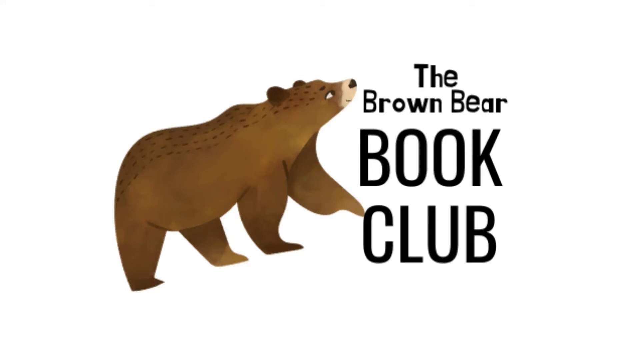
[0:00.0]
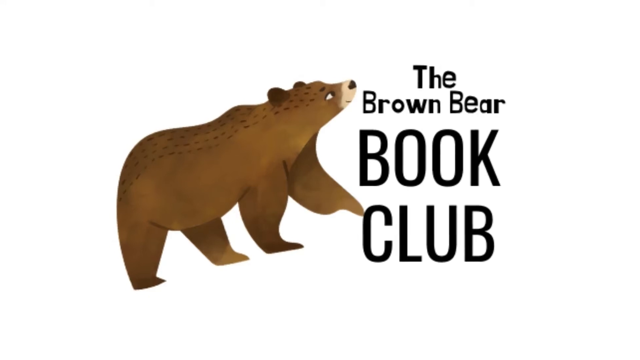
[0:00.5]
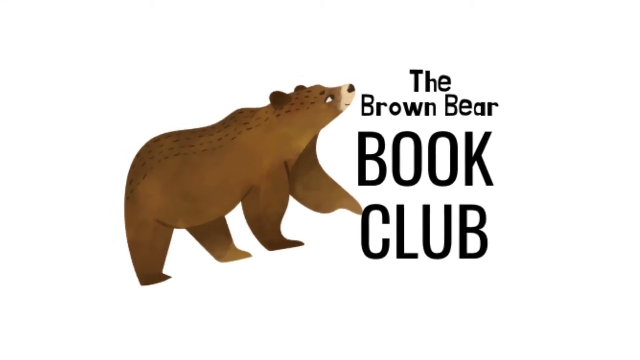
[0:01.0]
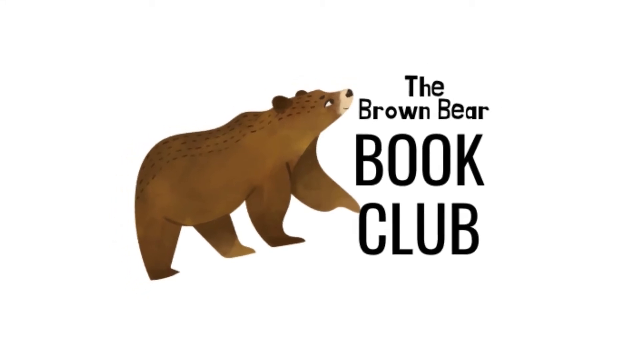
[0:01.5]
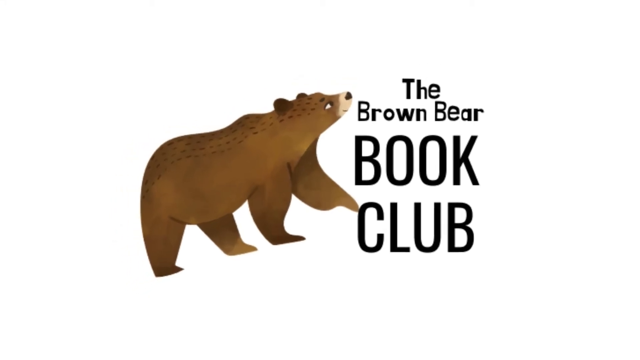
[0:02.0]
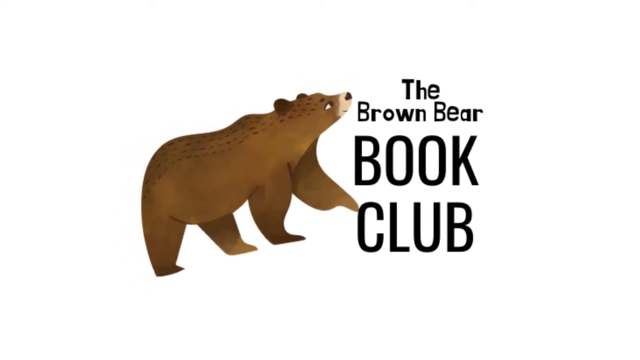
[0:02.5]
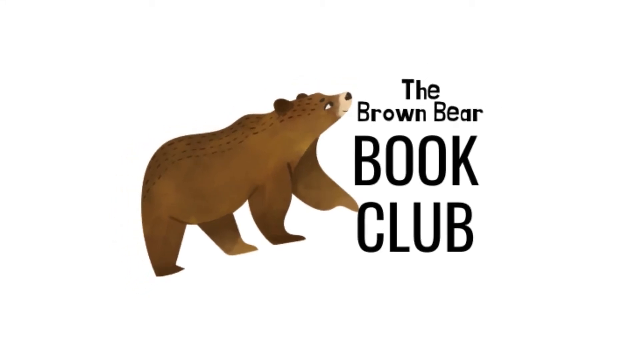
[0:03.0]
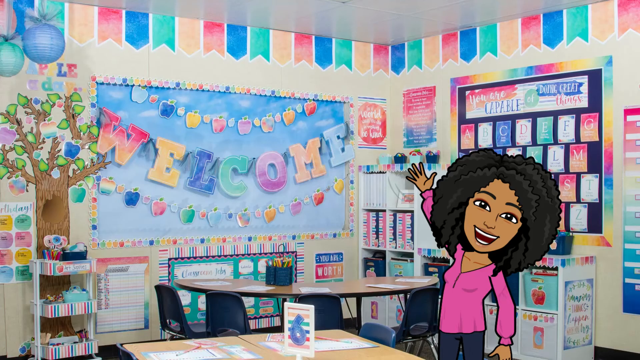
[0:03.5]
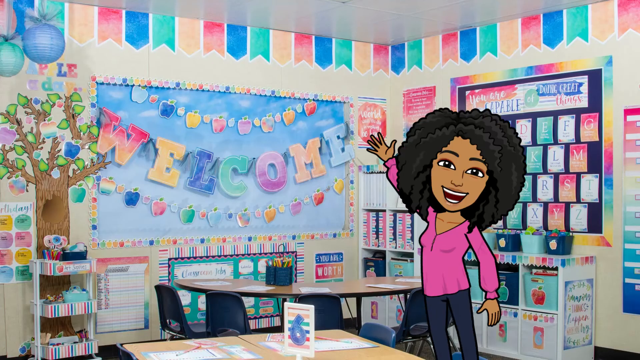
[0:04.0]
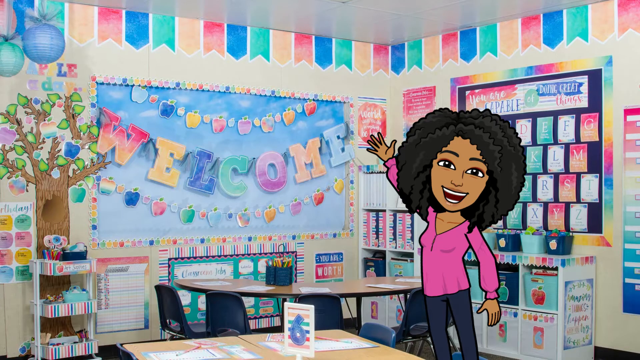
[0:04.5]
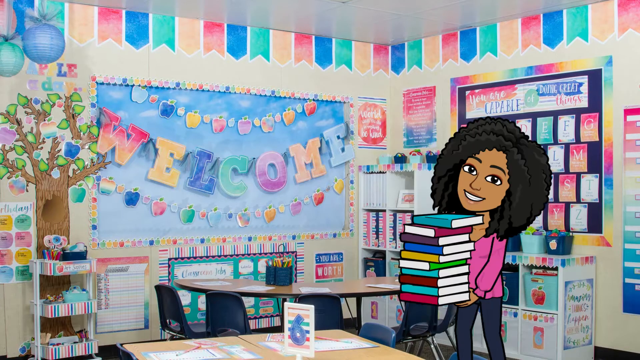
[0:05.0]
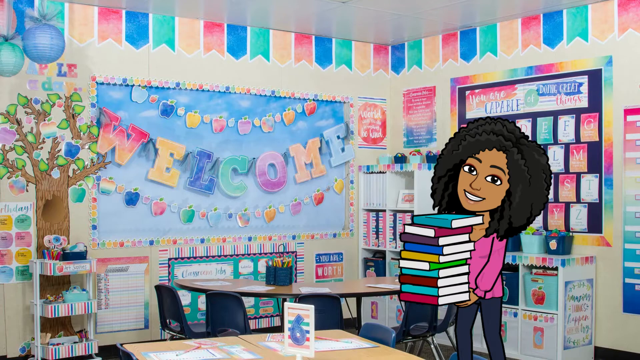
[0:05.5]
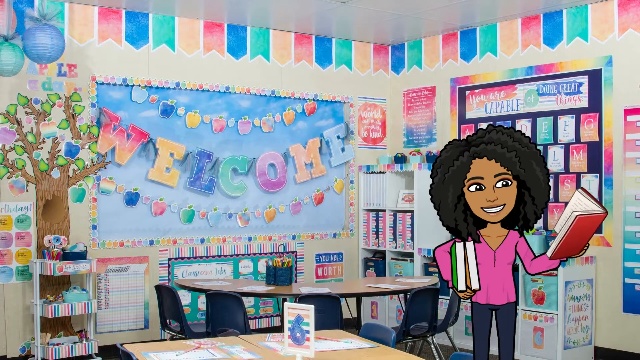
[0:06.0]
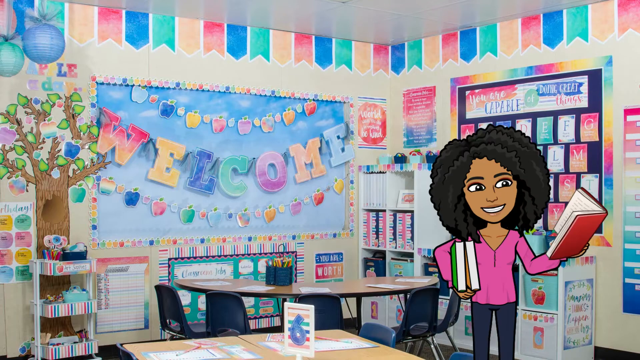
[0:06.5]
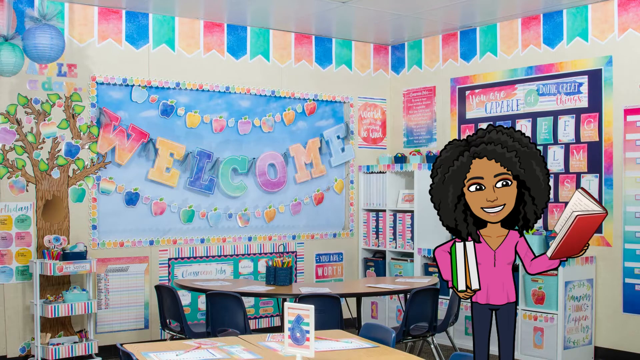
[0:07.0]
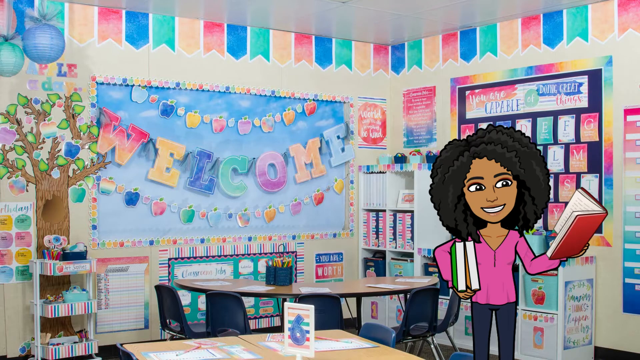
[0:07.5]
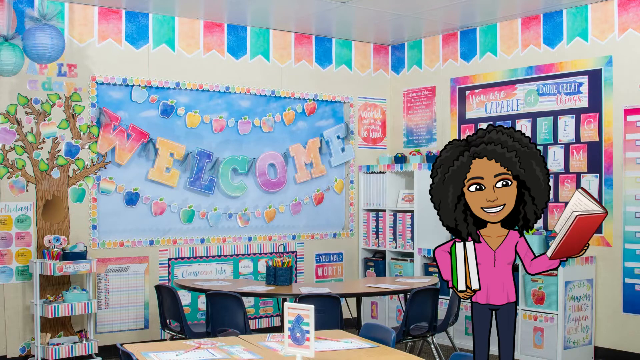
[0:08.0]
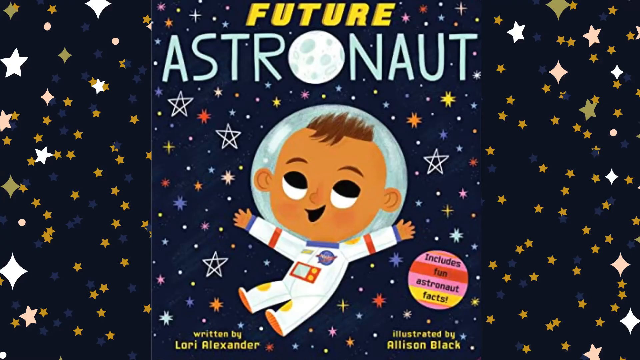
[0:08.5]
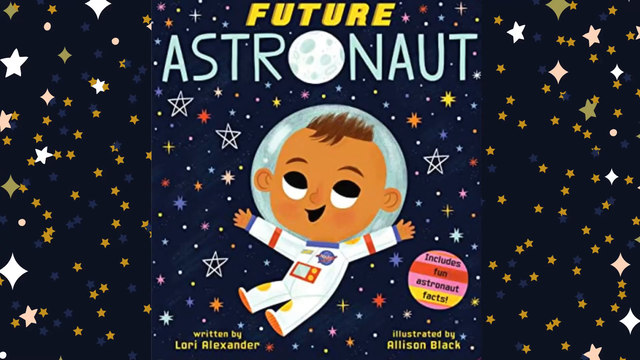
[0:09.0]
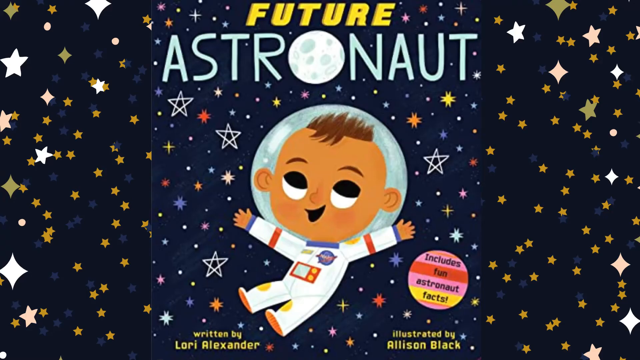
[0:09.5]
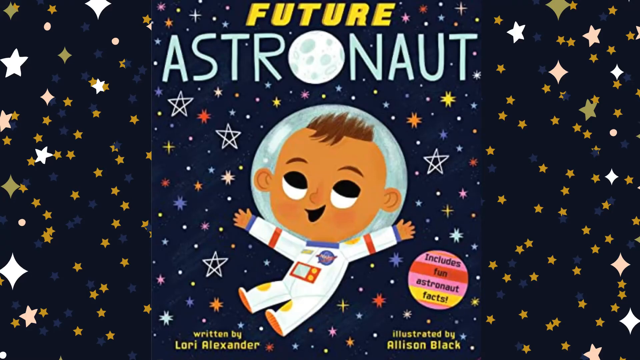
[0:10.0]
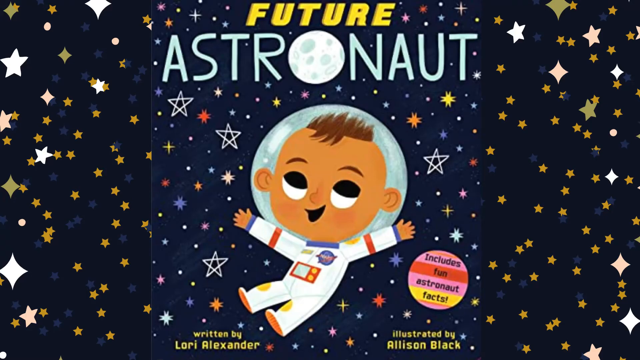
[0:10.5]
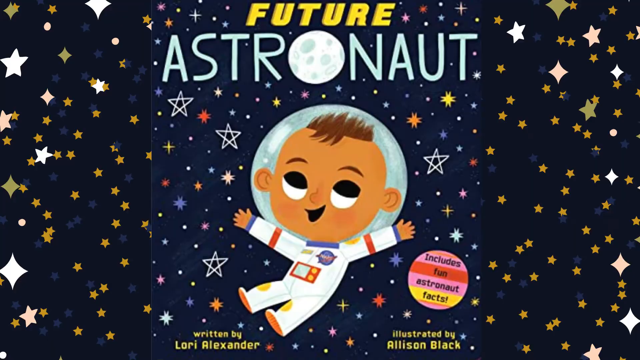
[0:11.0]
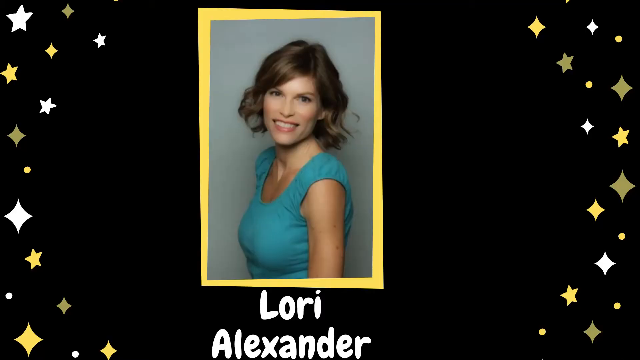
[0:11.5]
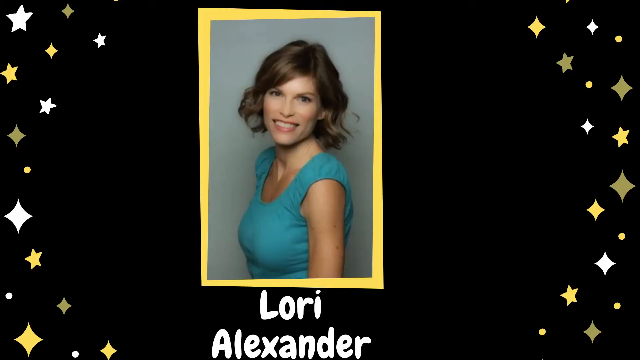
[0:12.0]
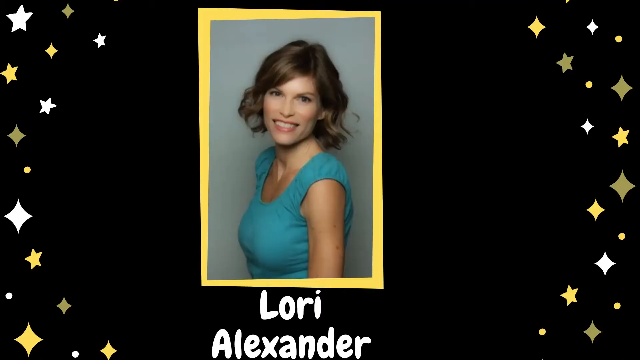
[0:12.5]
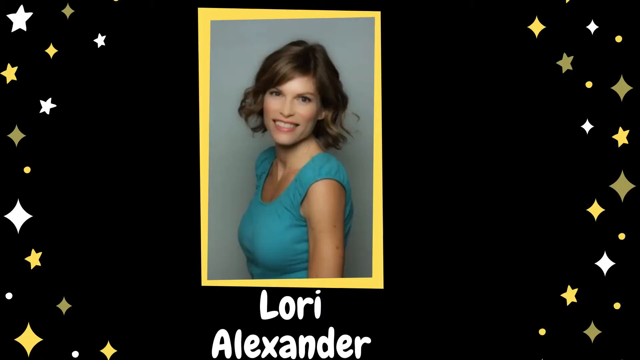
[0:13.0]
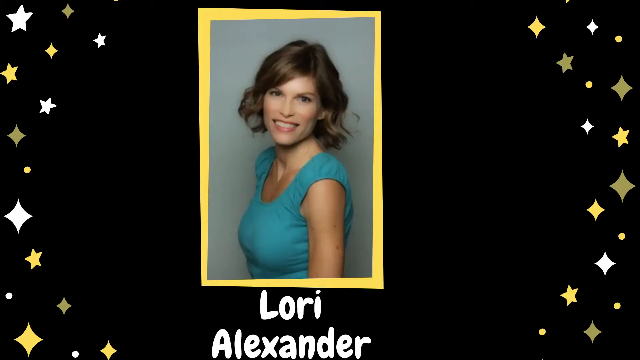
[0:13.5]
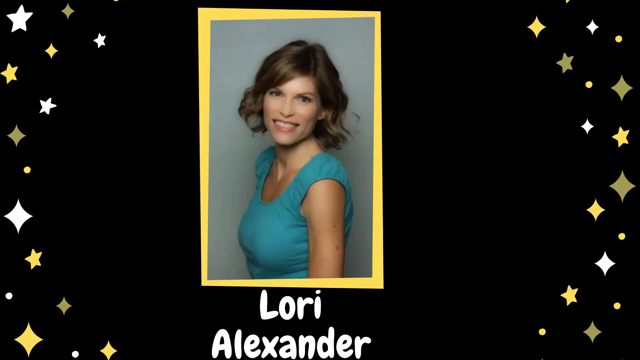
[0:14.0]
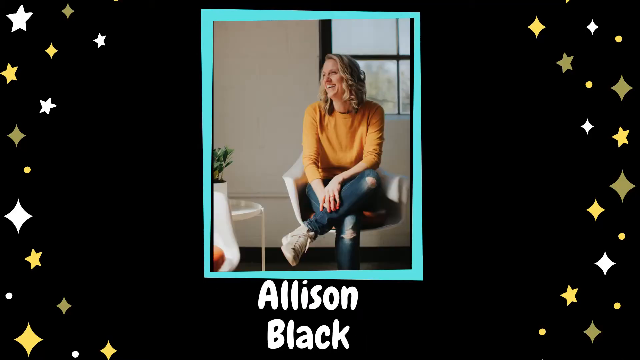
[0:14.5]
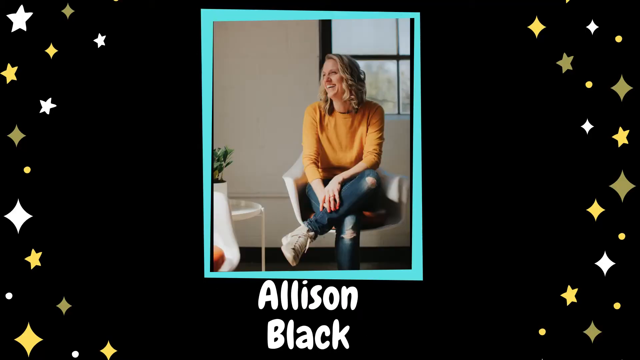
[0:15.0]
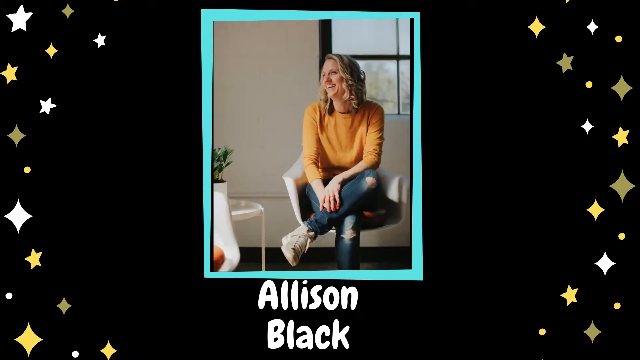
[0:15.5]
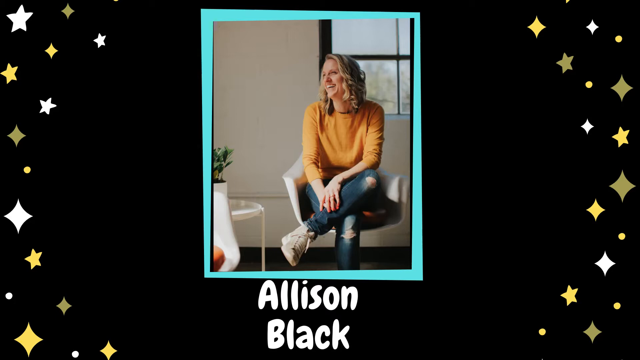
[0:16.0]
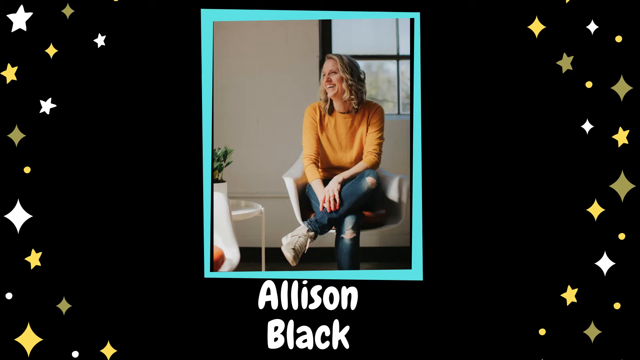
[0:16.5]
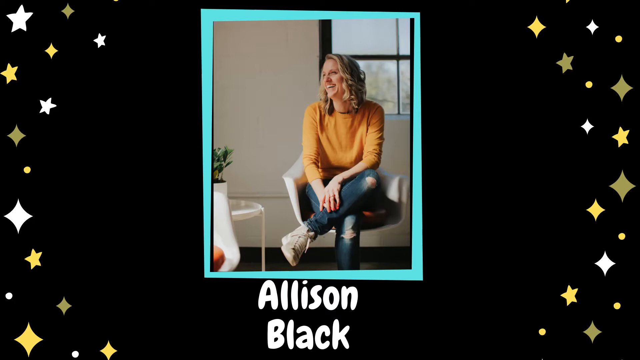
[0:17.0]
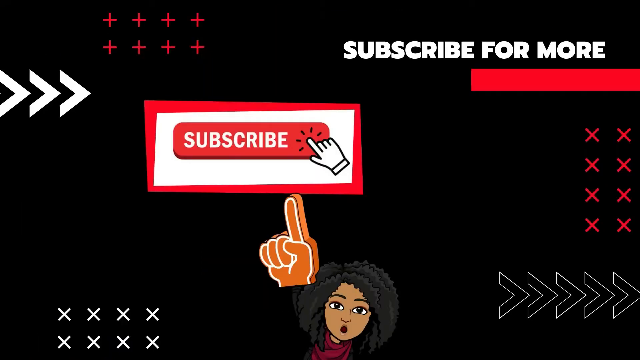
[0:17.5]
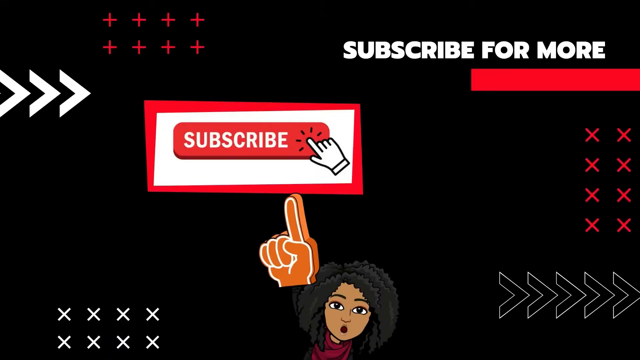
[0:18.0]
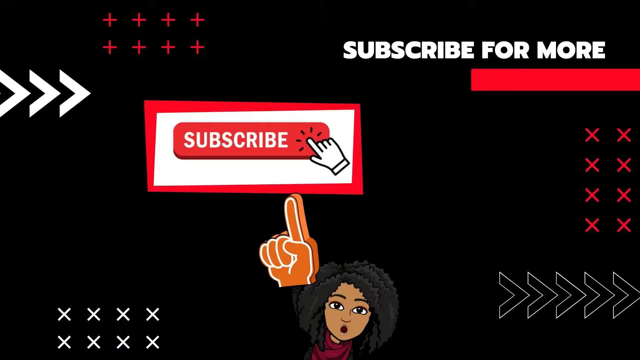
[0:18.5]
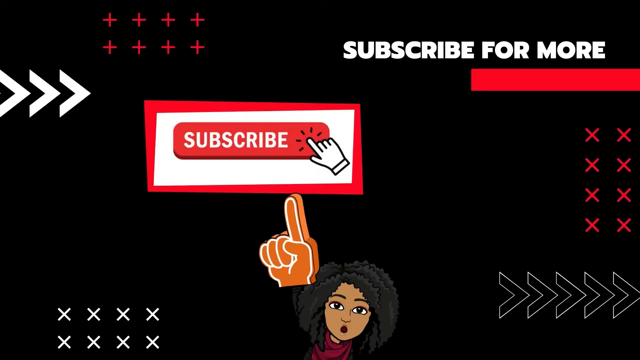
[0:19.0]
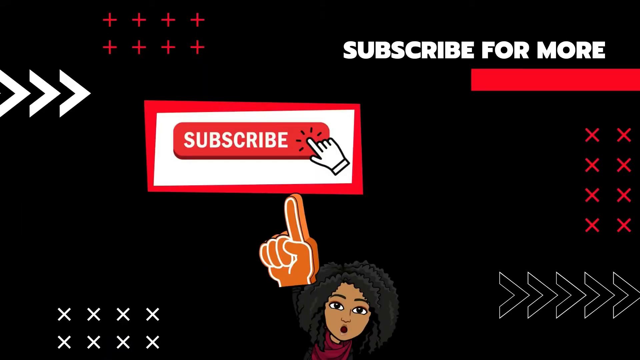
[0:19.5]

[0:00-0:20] A big bear appears with text in capital letters reading "the brown bear book club" on a white background. The bear and the brown bear book club logo are zoomed out, and a female cartoon appears against a very colorful background. She has afro hair, waves her hand and smiles. The cartoon then holds different books, and then holds three books, one of them red. The screen shifts to the future astronaut: a small kid in an astronaut costume against a background of stars in whitish and goldish colors. A picture of Lori Alexander is displayed with stars on the left and right sides and a black background, and Alison Black is also shown. The screen then flips to show red dashes and three signs, with "subscribe" on the upper right and a red and white subscribe in the middle. There is a hand indication at the bottom, and the cartoon is also there.